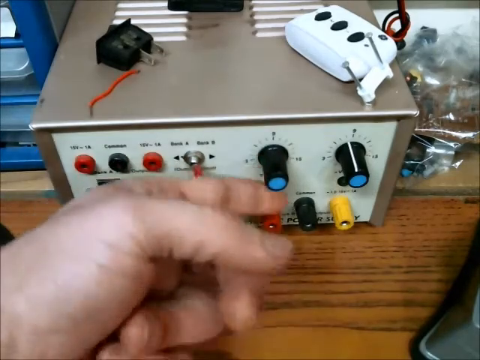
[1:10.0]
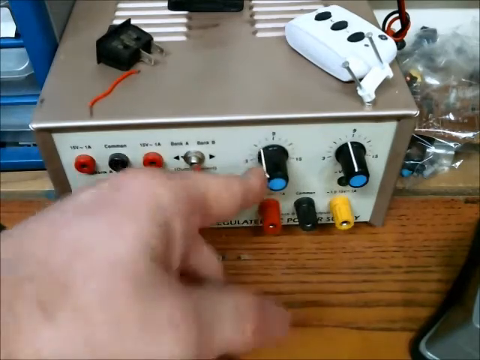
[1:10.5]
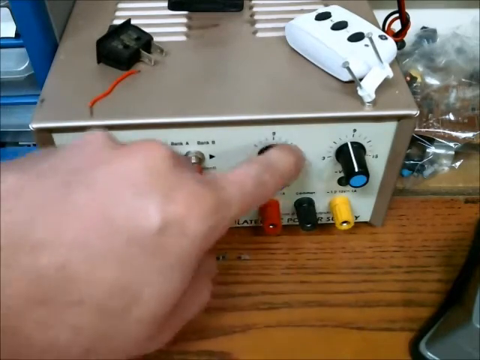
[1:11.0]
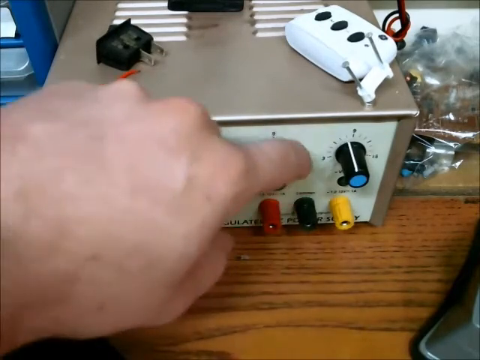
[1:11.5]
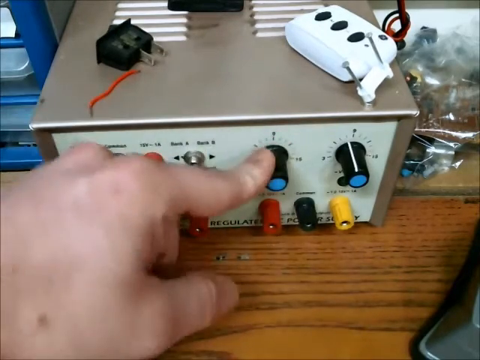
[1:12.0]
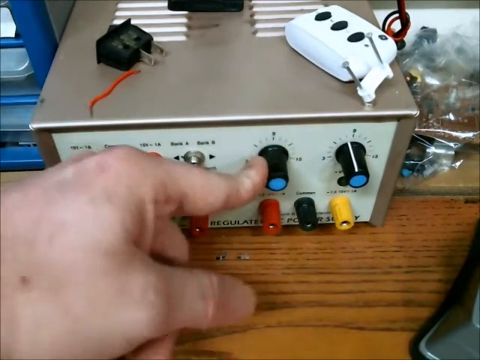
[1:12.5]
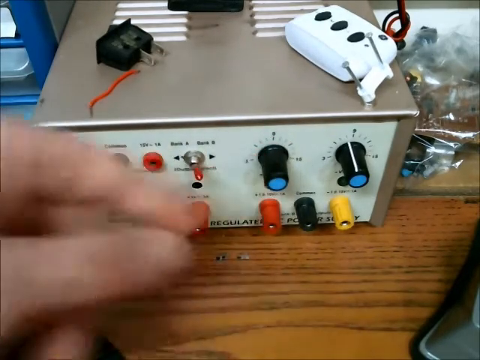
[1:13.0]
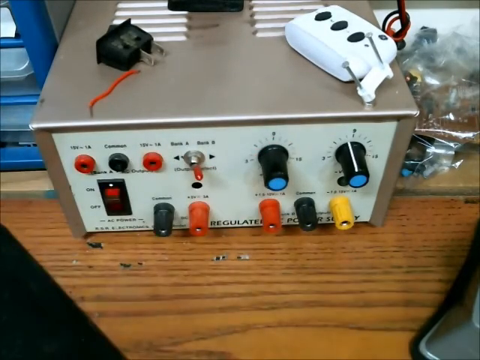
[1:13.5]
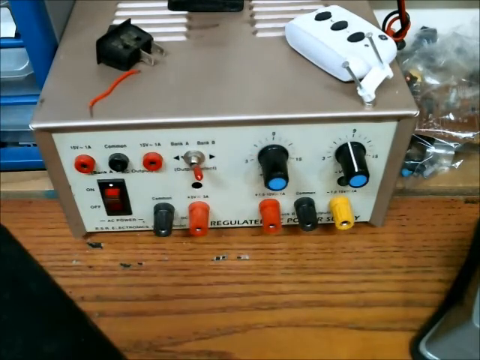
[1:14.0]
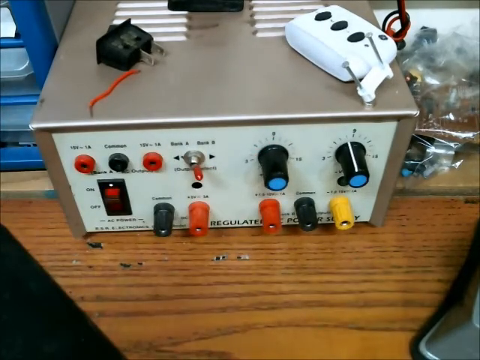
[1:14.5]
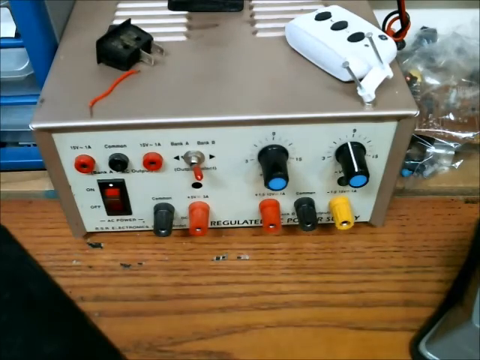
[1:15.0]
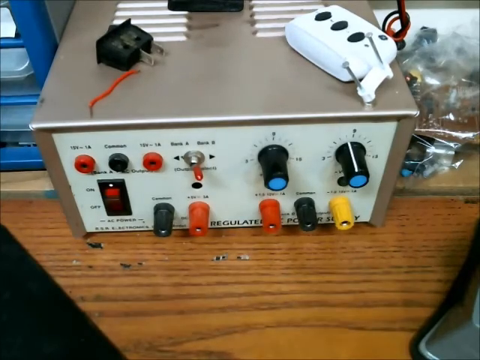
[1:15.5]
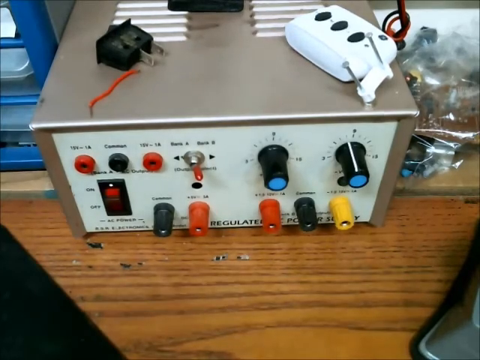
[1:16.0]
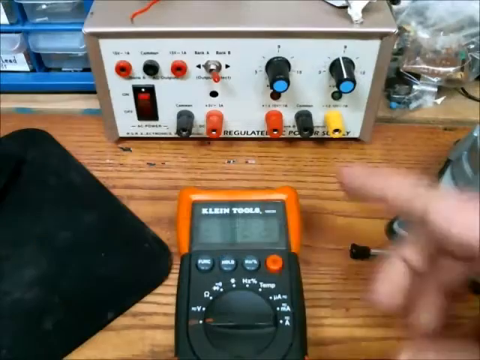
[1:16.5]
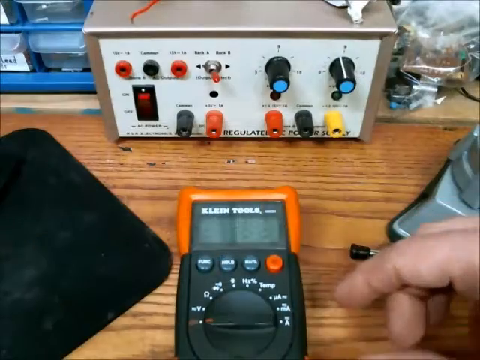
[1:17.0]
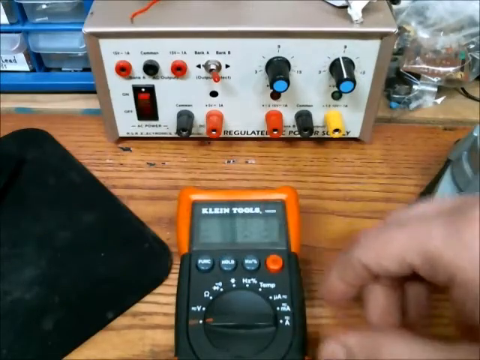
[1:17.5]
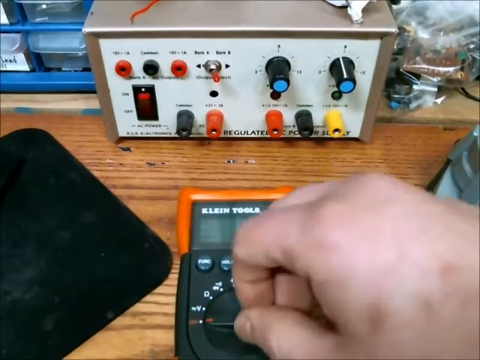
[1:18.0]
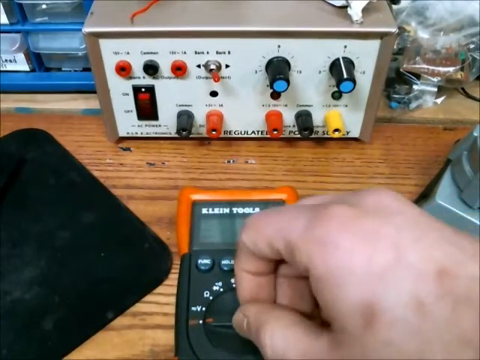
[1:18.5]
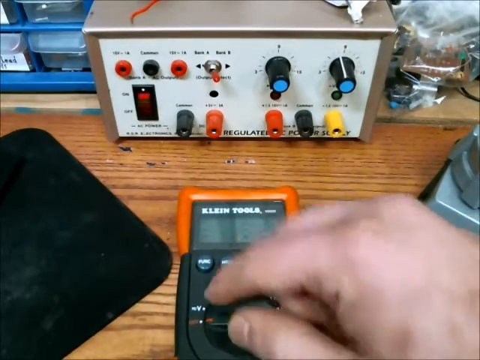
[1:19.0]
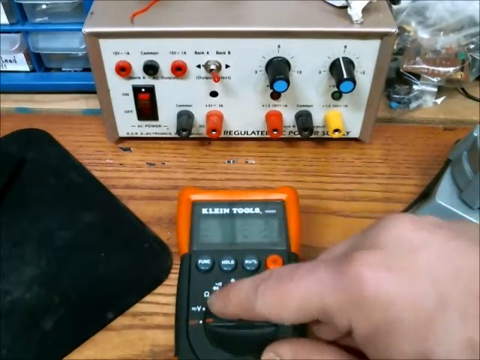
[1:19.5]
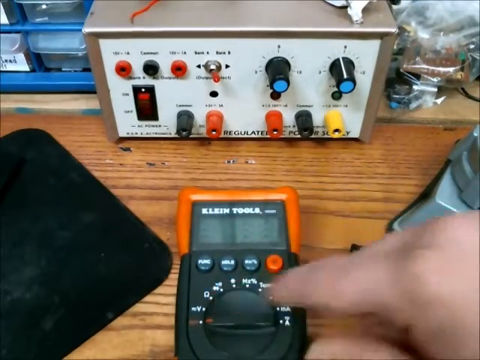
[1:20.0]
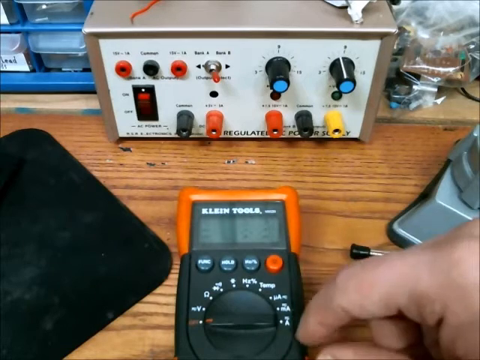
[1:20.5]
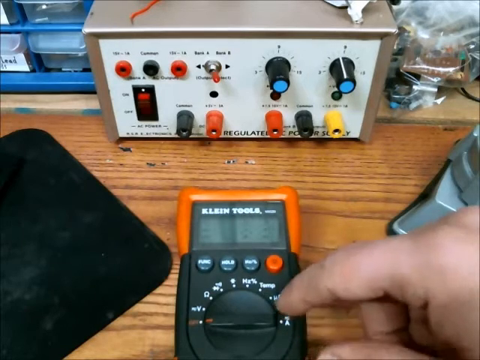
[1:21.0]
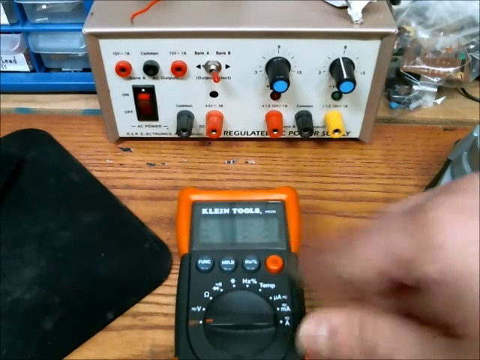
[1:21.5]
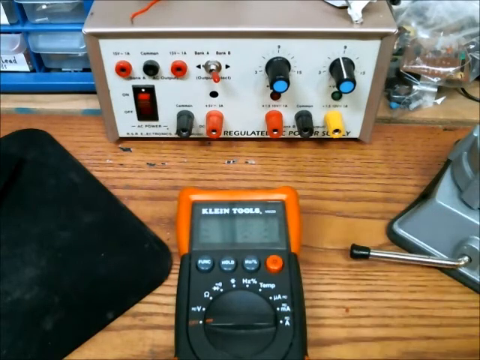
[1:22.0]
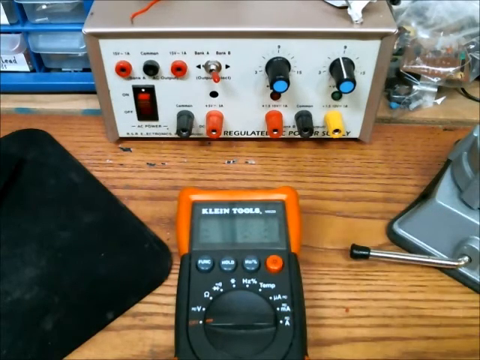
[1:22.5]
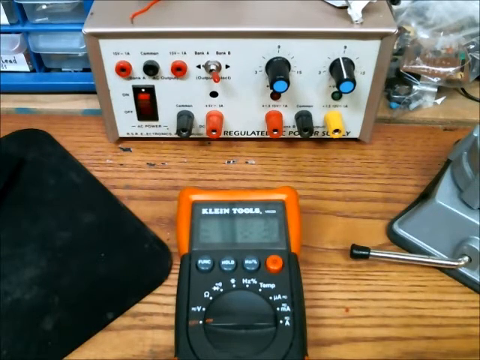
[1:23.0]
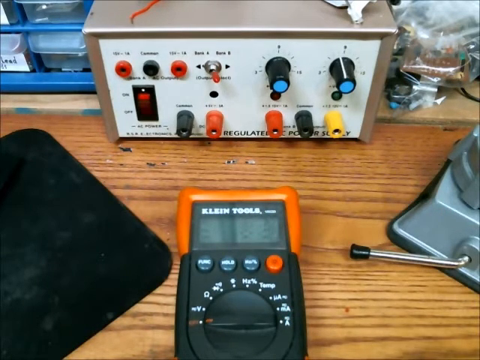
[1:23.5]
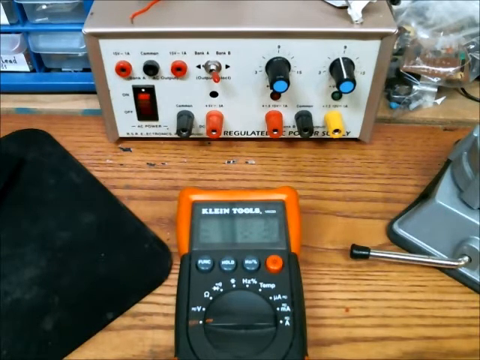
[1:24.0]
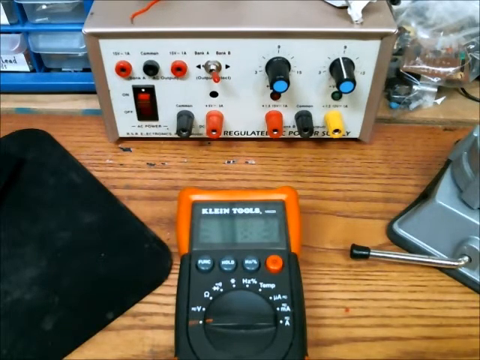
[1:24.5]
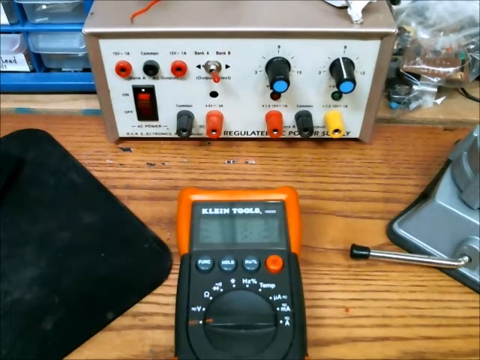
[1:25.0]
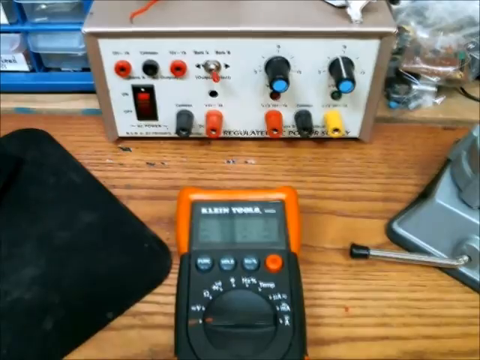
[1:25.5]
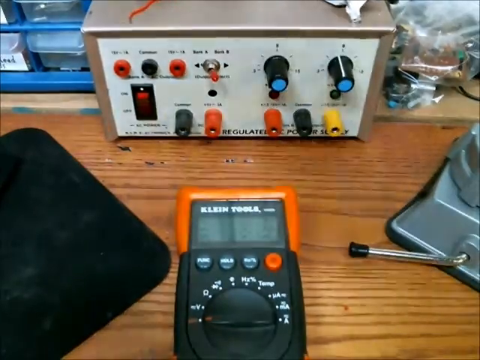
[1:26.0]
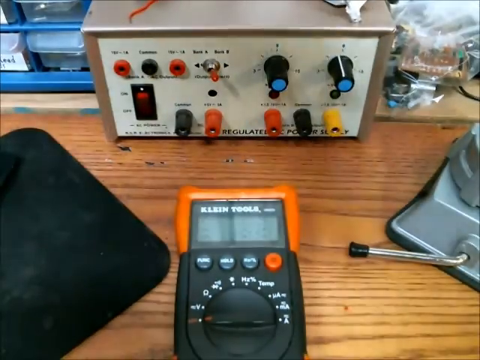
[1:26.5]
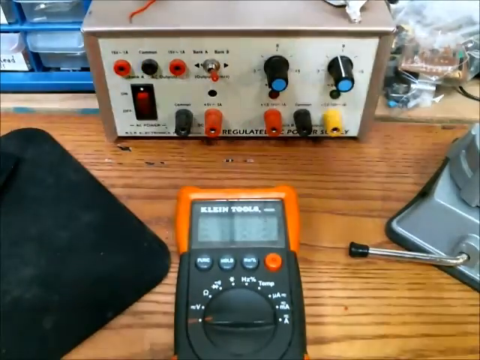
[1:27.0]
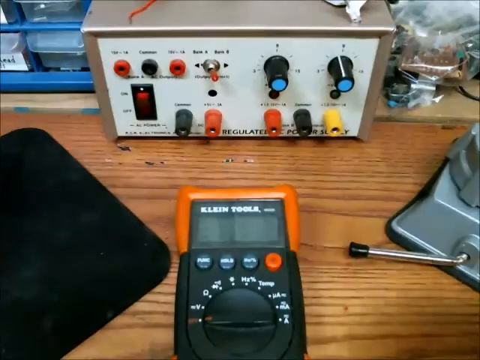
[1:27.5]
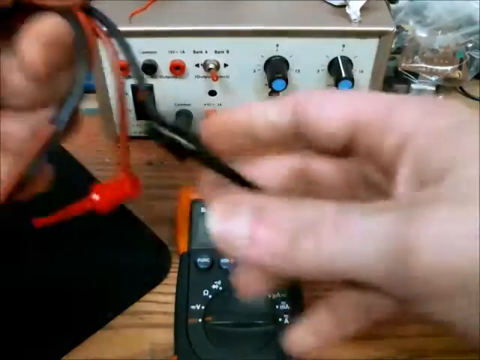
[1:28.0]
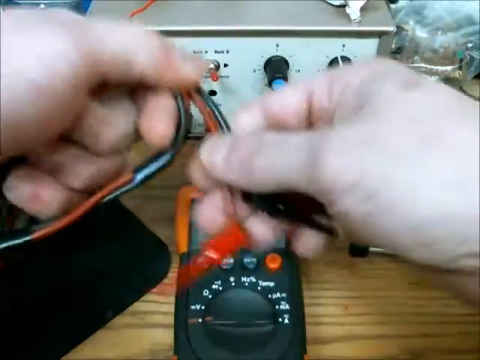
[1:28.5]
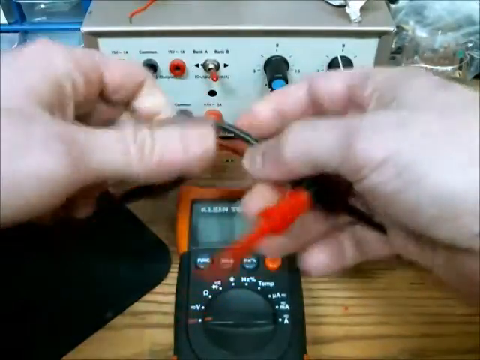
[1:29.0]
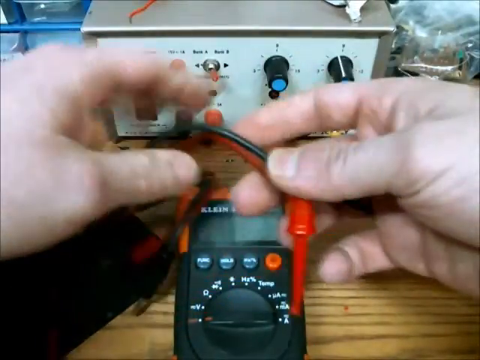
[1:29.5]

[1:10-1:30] An electronic box with a couple of different knobs is shown: two black knobs with blue dots, and three knobs on the bottom, which from right to left are yellow, green and red. Someone's left hand touches the first black knob on the left, the one with the blue circle on the end, and turns it around and back. The next shot shows the same electronic box and some kind of little tool, with the right hand pushing buttons. Then both hands are in the frame holding some wires. The electronic box is to the right of the cubbyhole unit, and on top of the box is some kind of white thing with three circles that looks like a plug.